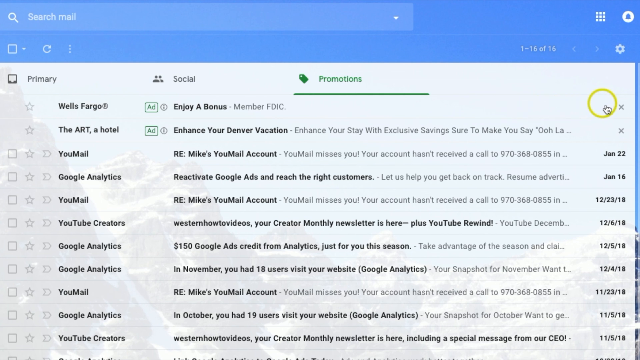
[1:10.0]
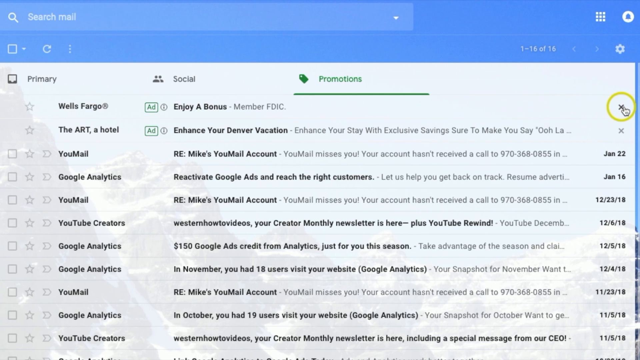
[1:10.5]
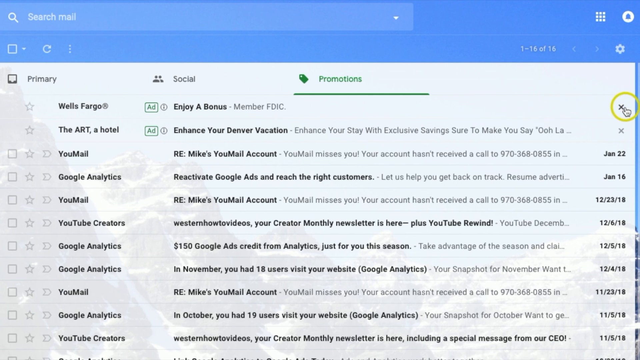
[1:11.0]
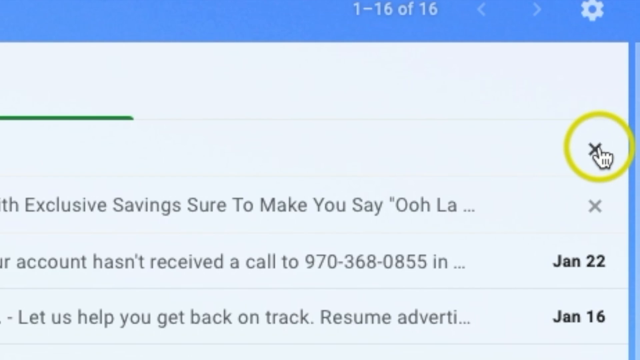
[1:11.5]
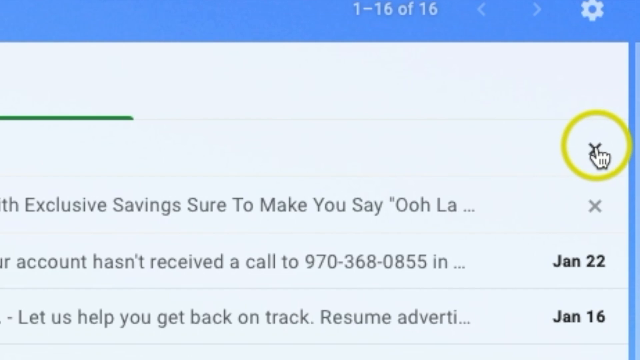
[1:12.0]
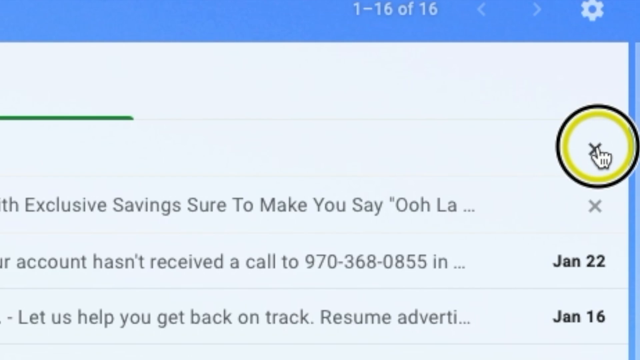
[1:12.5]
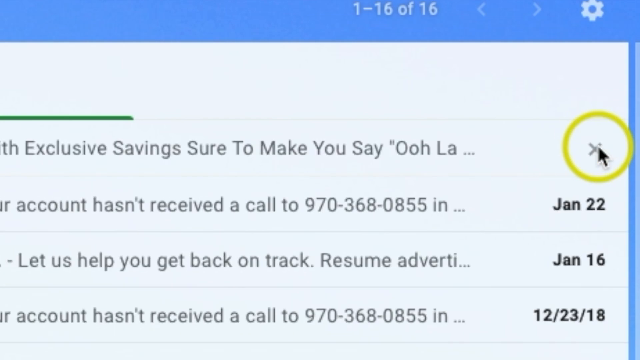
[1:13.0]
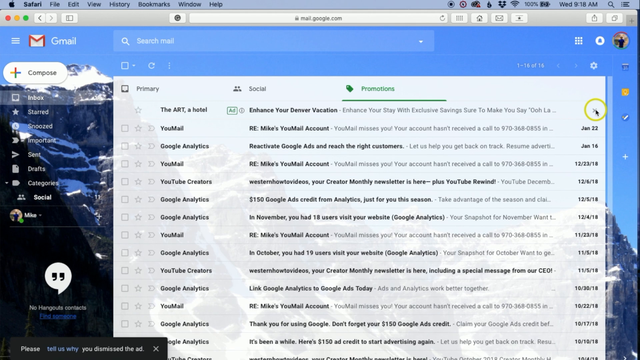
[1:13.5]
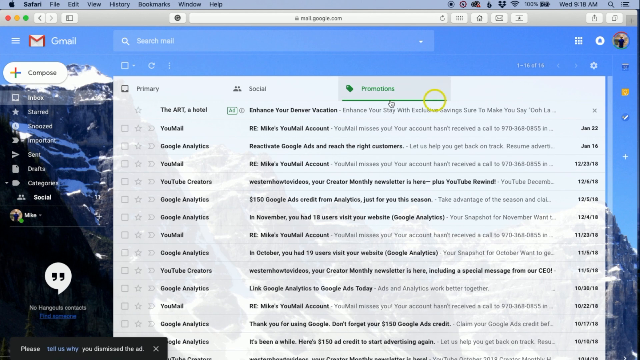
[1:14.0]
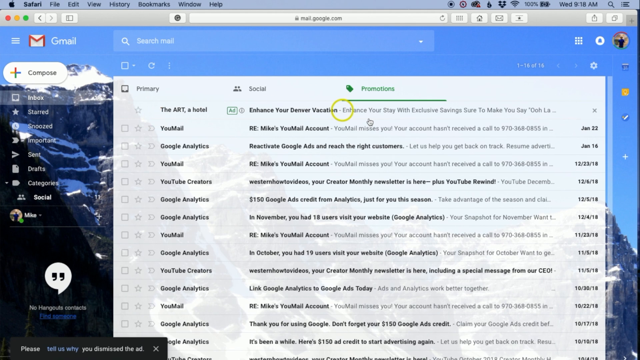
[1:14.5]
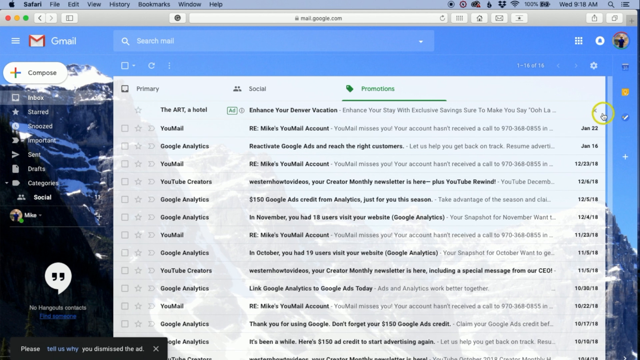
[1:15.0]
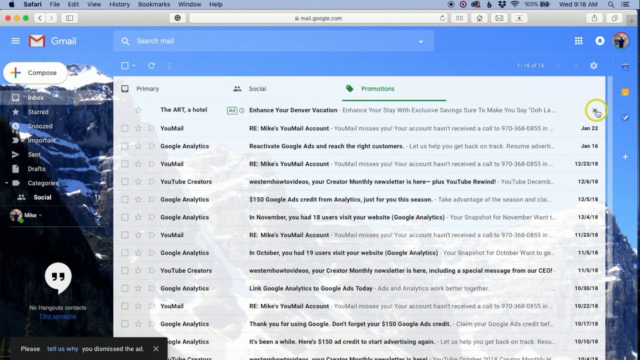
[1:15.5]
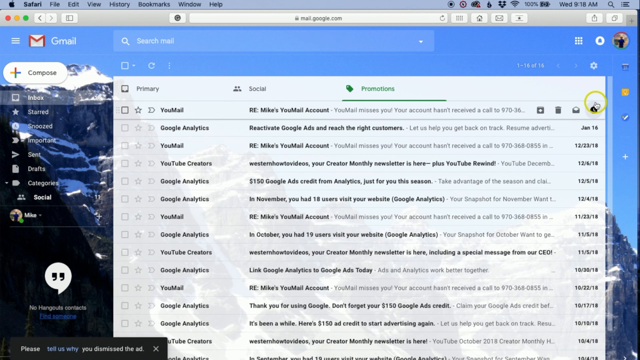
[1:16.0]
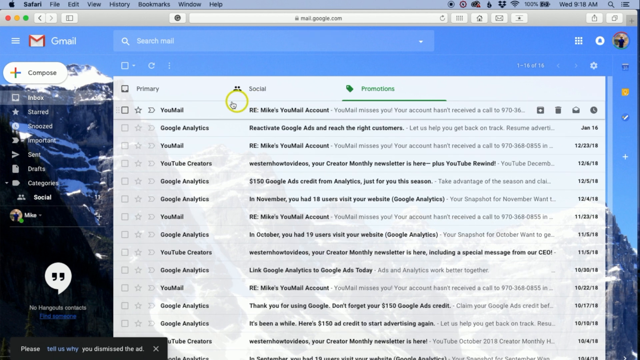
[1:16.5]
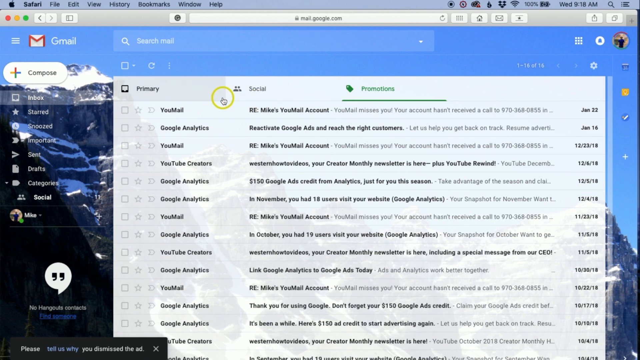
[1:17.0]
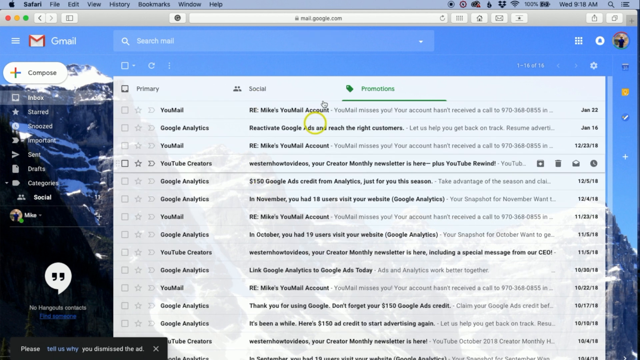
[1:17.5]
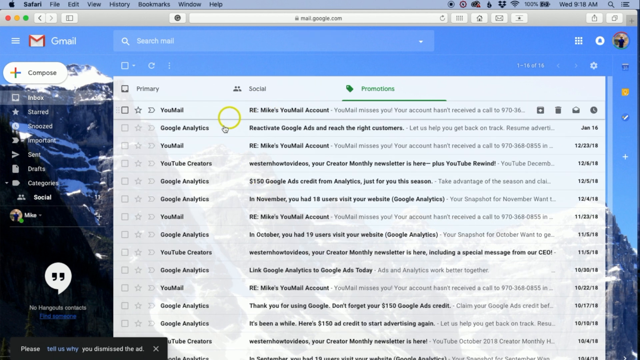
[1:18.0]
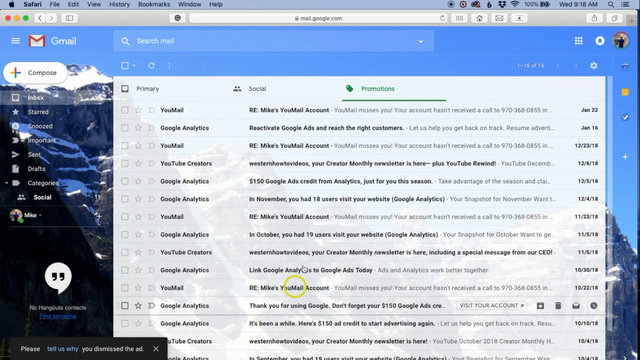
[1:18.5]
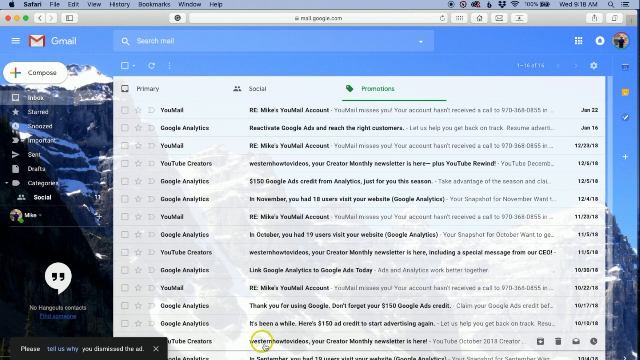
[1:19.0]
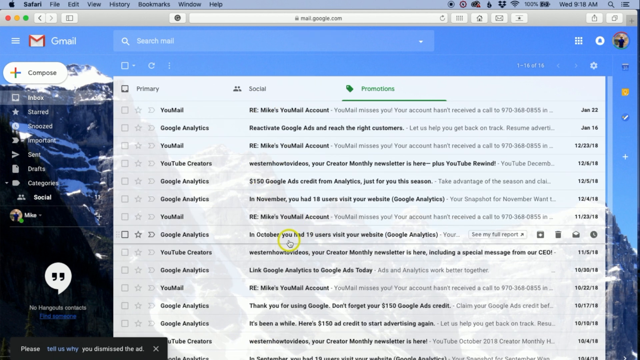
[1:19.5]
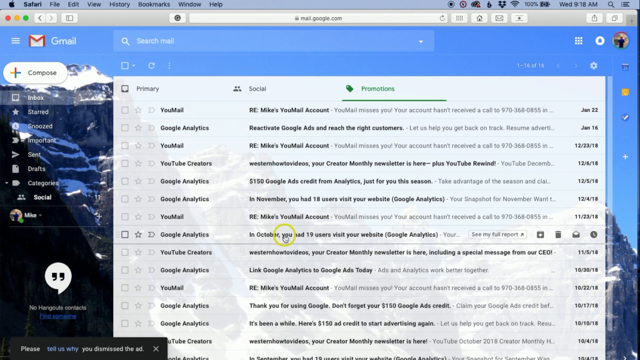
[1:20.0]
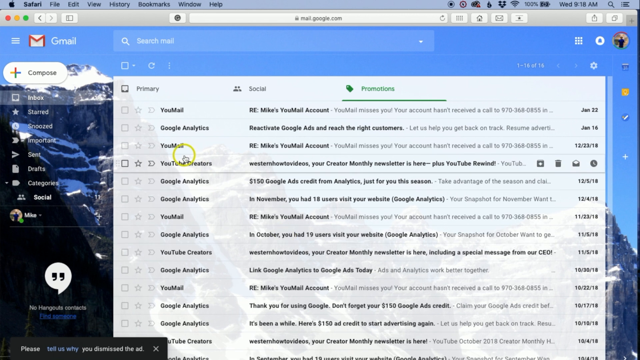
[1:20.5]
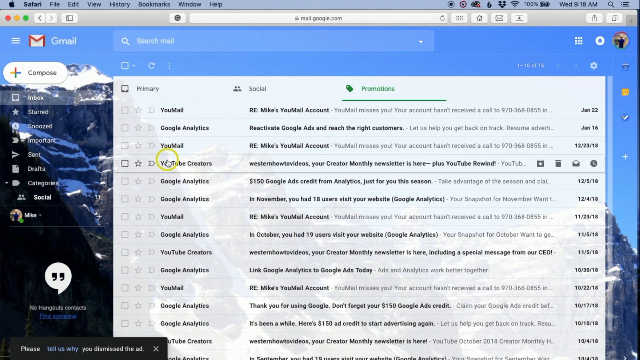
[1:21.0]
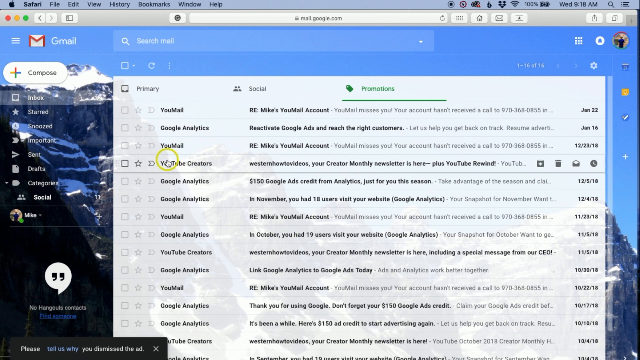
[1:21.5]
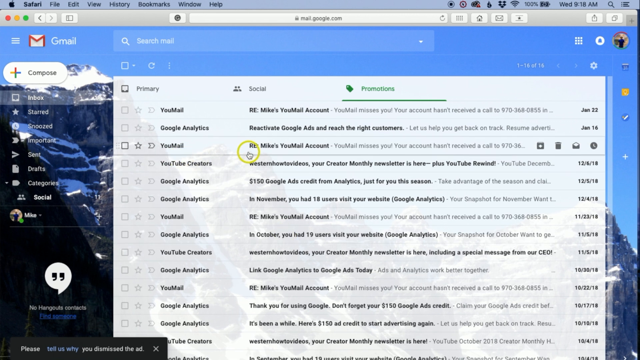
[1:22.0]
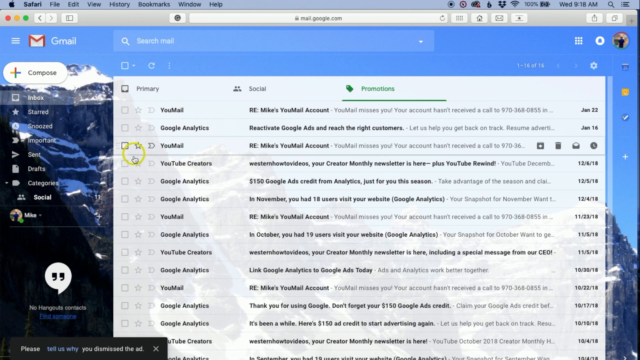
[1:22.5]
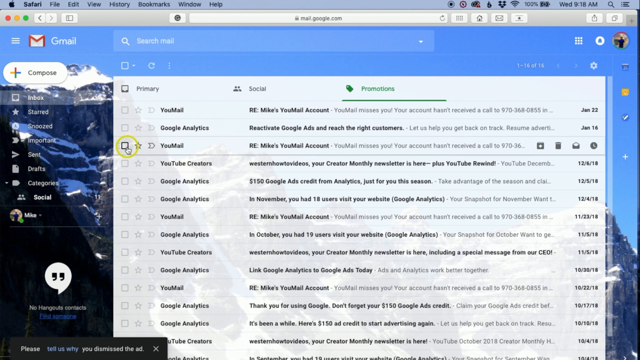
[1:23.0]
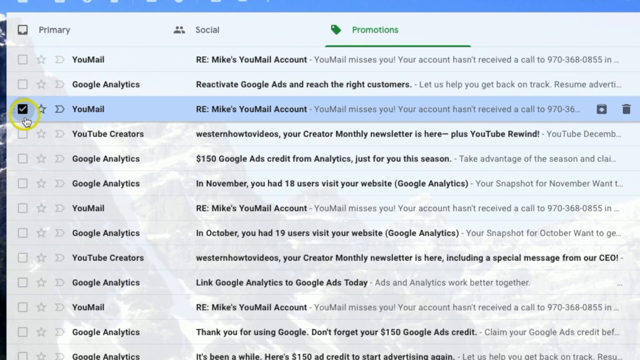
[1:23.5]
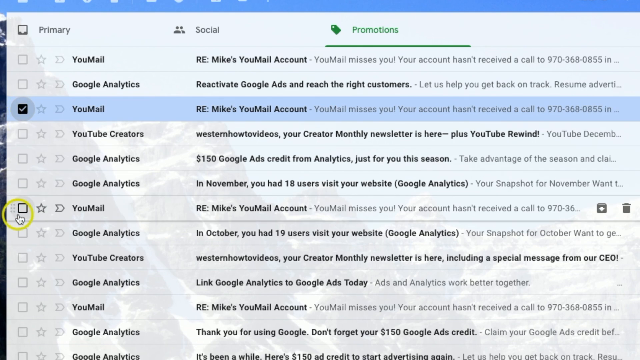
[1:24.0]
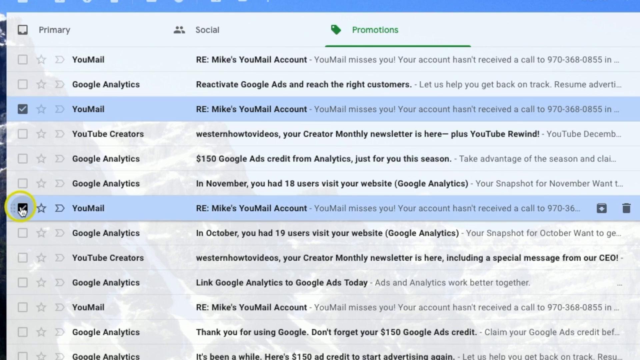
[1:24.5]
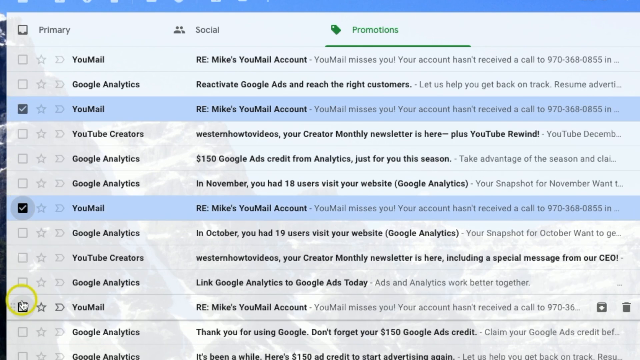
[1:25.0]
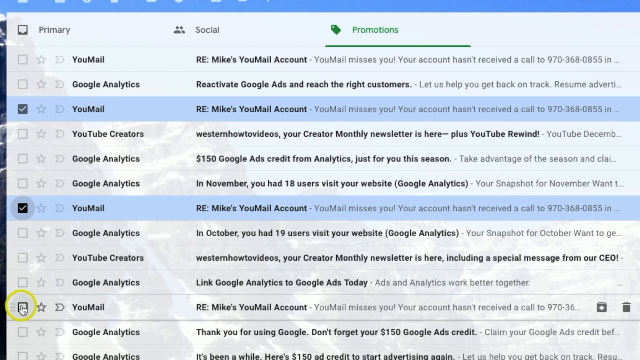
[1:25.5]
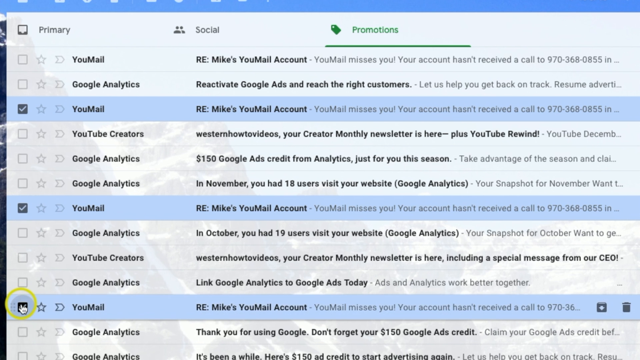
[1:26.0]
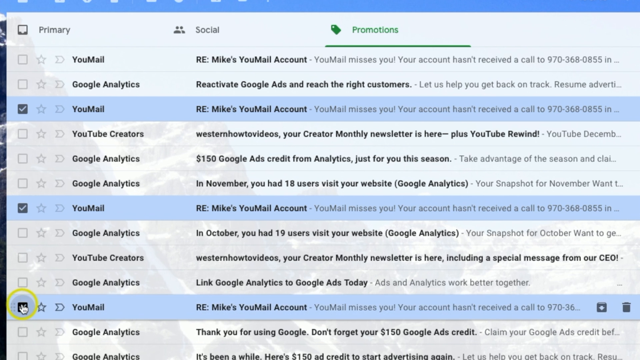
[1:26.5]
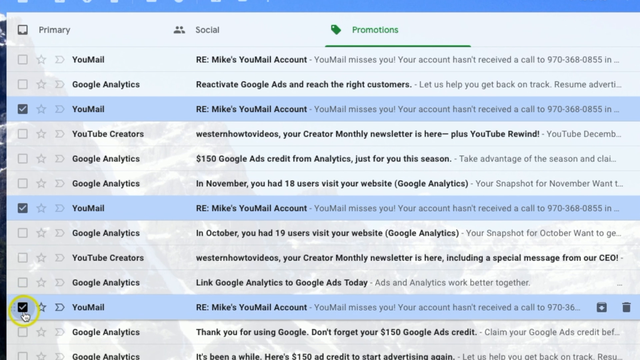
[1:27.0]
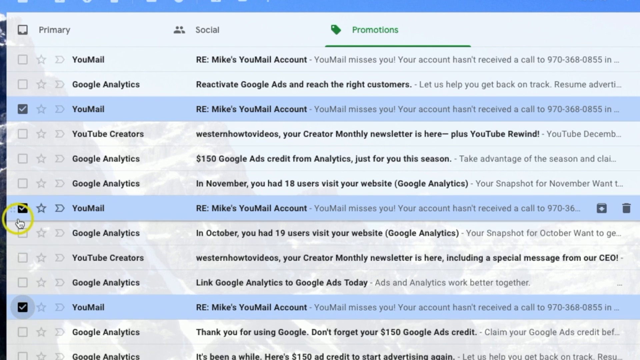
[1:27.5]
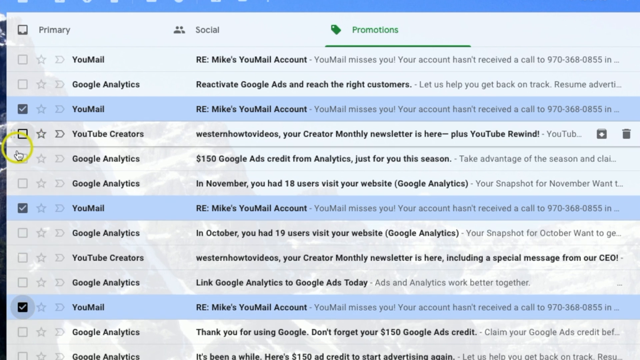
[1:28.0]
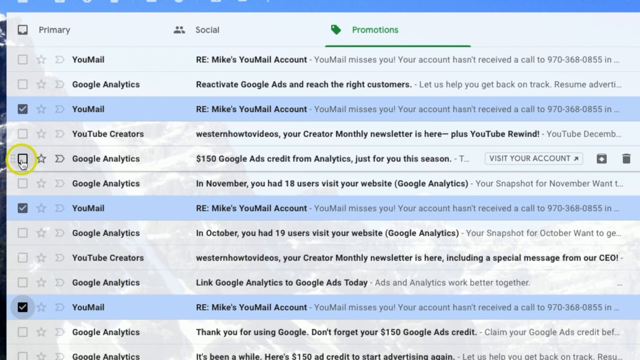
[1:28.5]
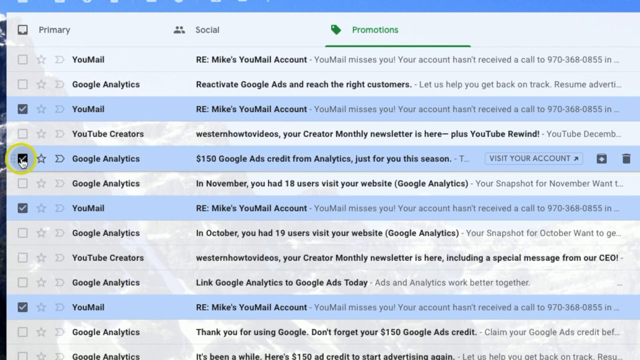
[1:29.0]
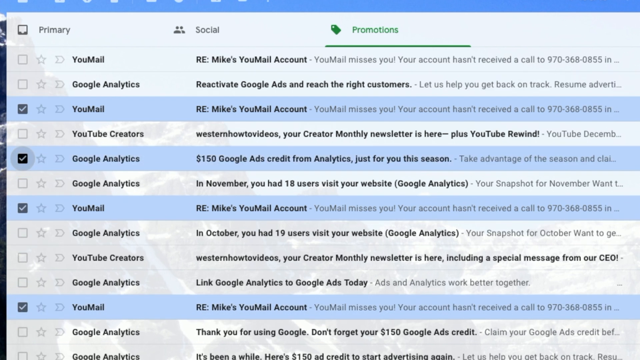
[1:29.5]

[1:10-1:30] The cursor circles around an X at the top middle and clicks it to close the ad, then hovers over the X of another ad and closes that one too. On the left side the cursor circles around and goes over to YouTube Creators. Check marks appear next to emails one after another, so three emails are checked; one Google Analytics email is between two emails at the top. The cursor goes to another X. Circles appear around different checkboxes as boxes are checked to select them, potentially to delete them.